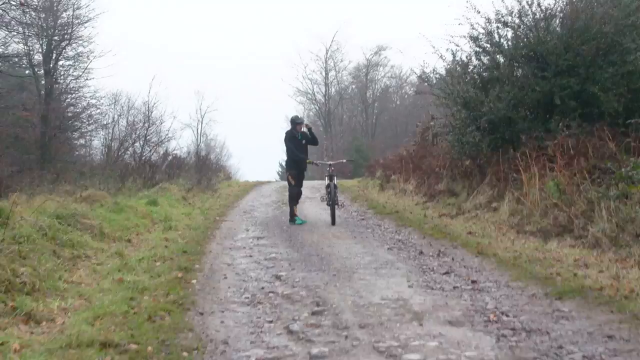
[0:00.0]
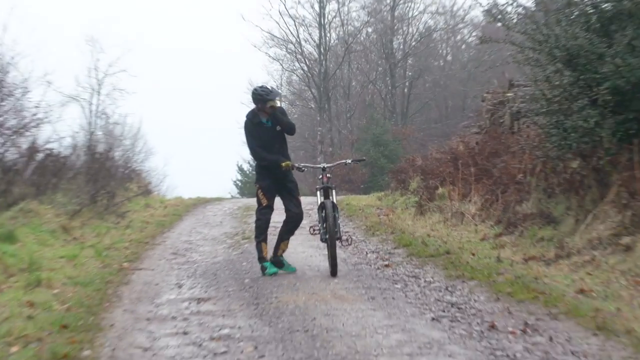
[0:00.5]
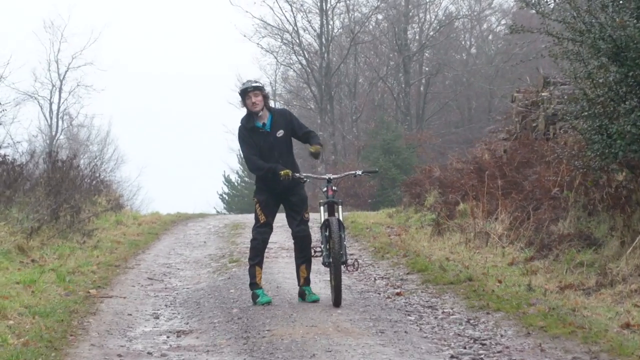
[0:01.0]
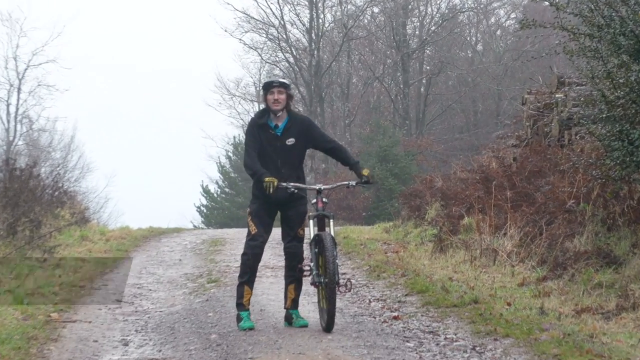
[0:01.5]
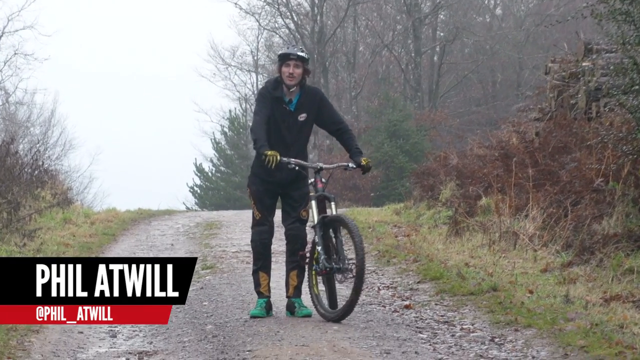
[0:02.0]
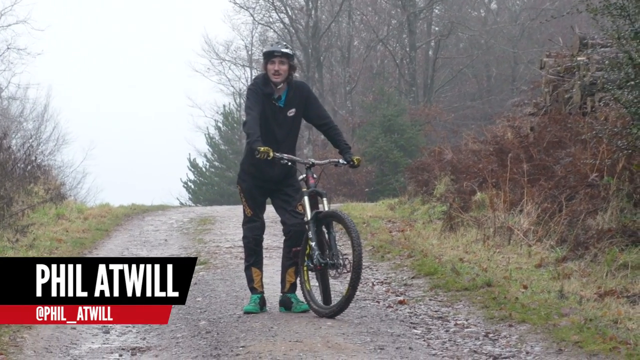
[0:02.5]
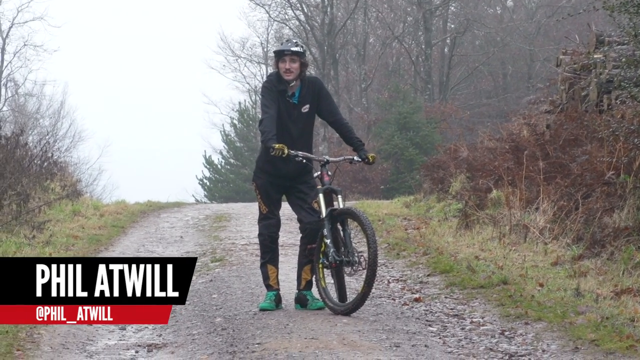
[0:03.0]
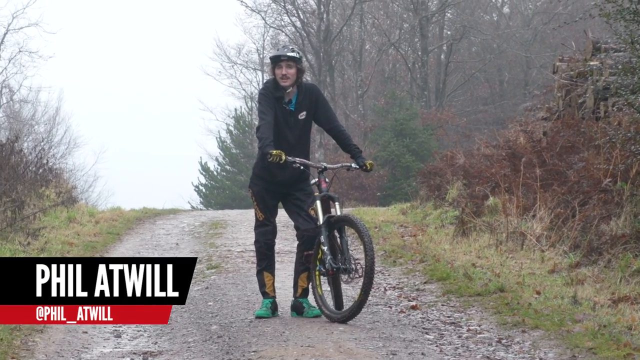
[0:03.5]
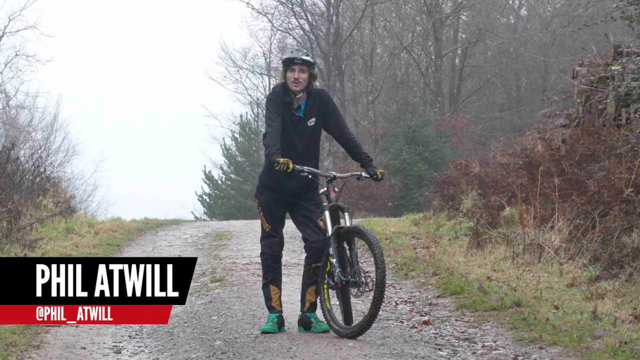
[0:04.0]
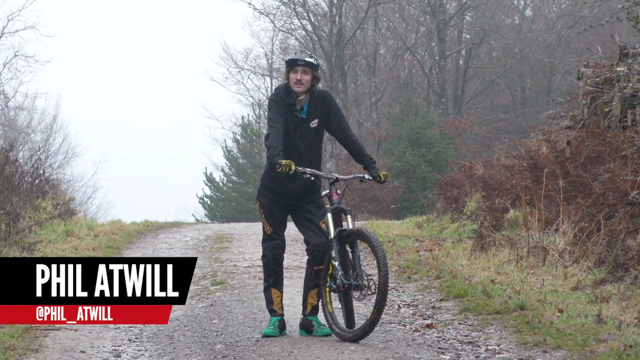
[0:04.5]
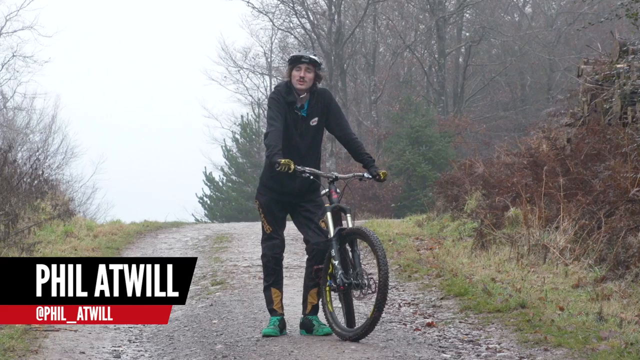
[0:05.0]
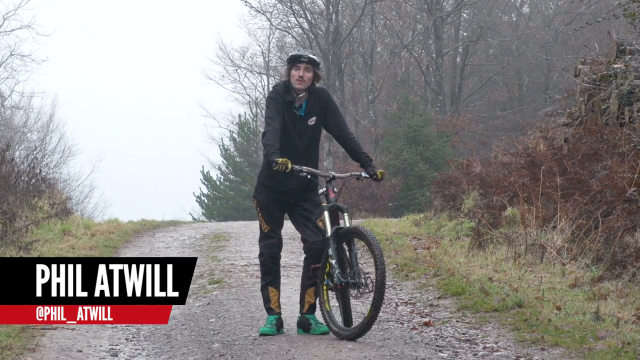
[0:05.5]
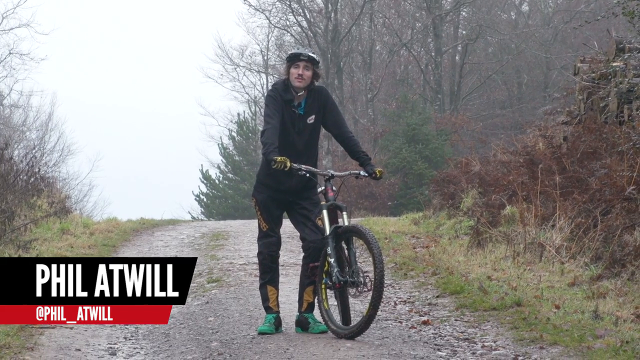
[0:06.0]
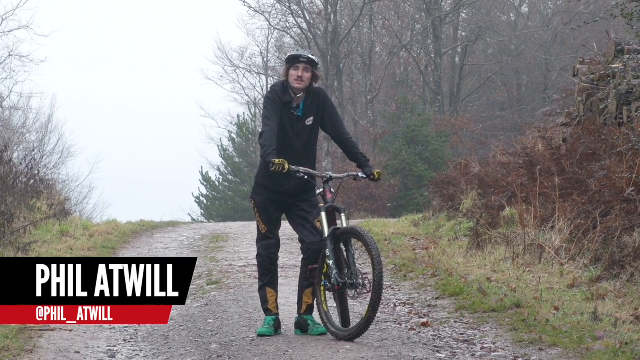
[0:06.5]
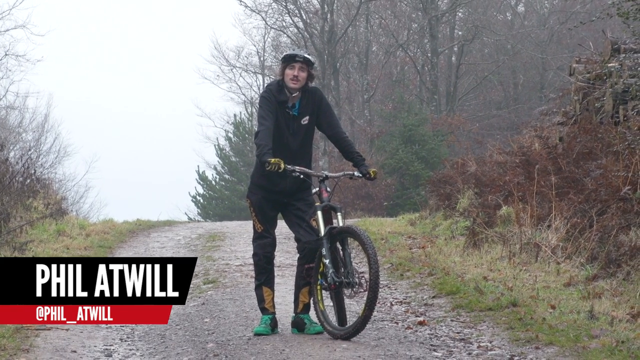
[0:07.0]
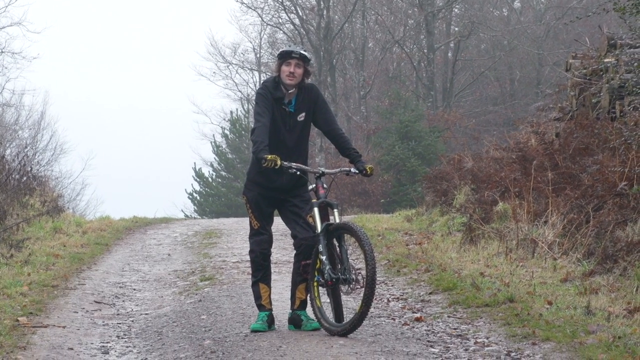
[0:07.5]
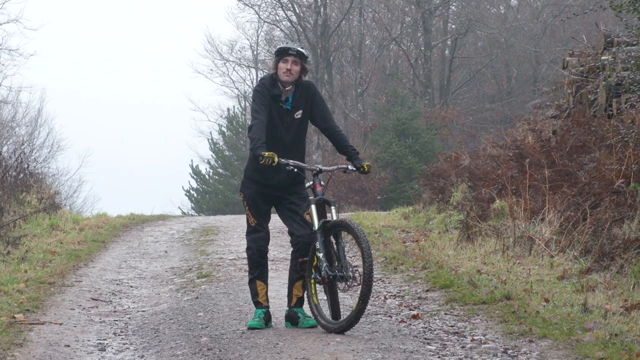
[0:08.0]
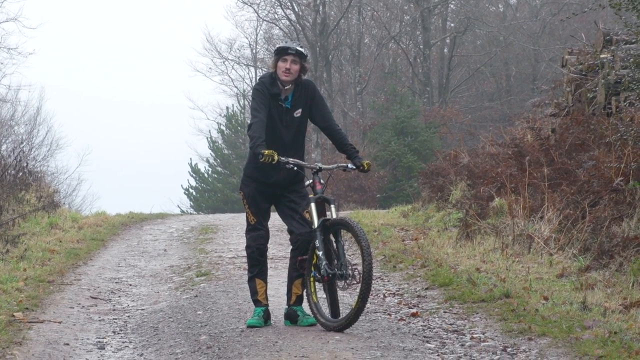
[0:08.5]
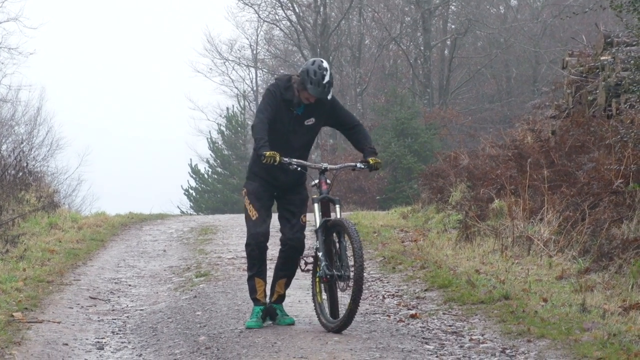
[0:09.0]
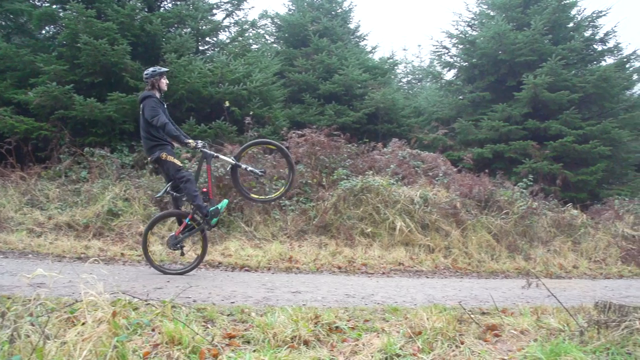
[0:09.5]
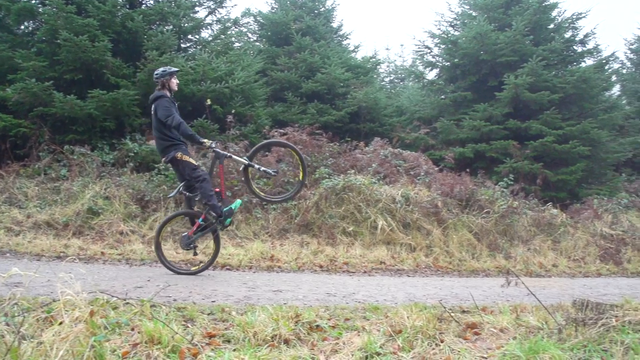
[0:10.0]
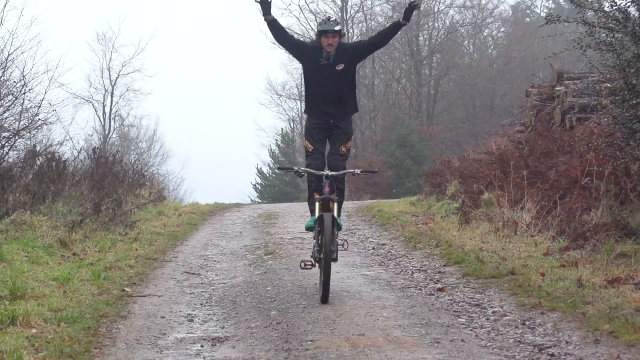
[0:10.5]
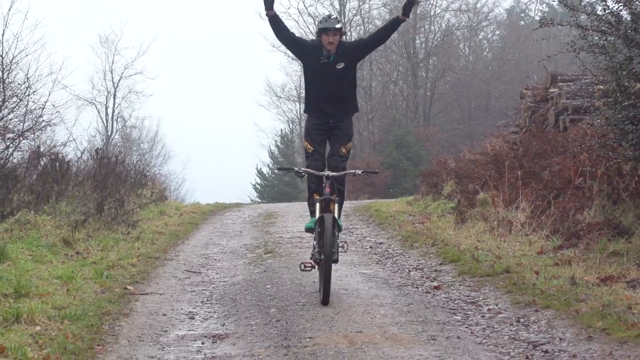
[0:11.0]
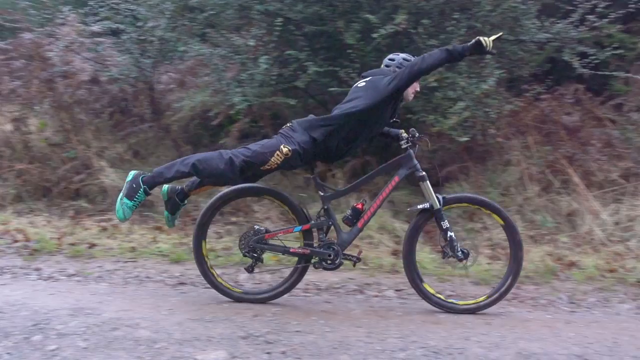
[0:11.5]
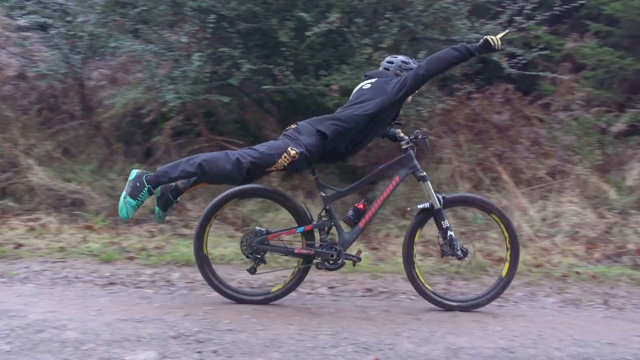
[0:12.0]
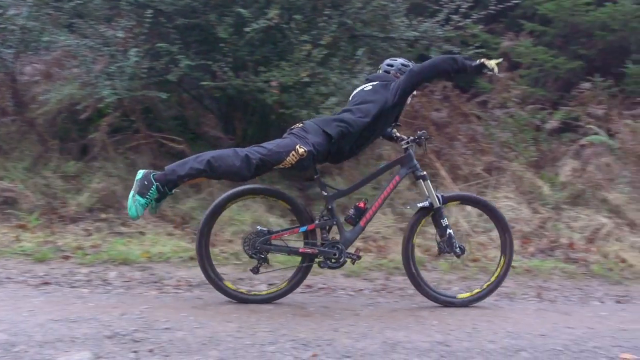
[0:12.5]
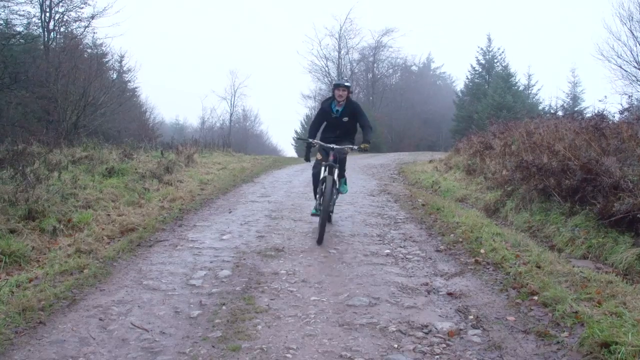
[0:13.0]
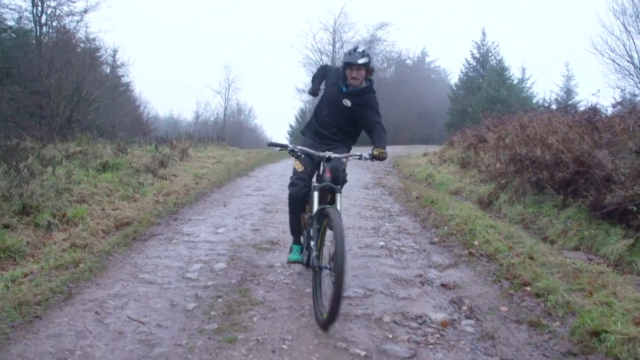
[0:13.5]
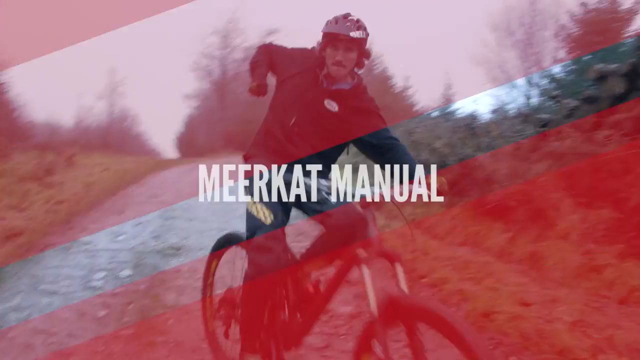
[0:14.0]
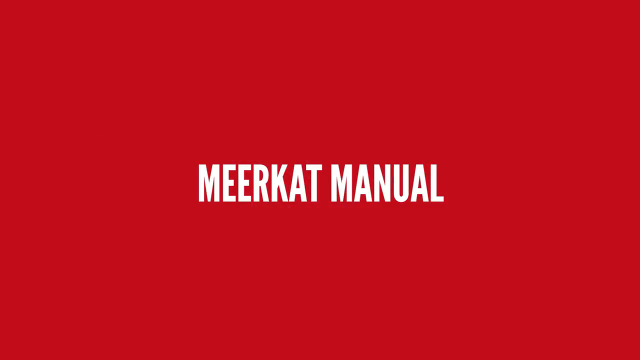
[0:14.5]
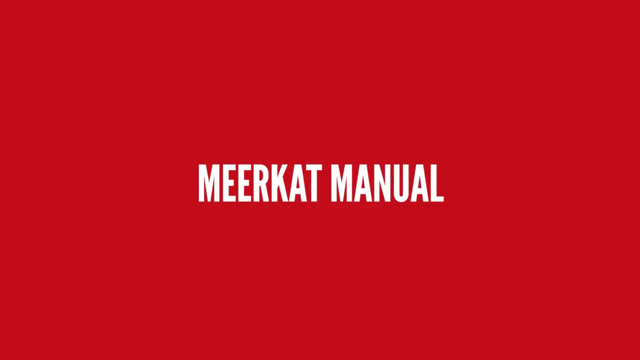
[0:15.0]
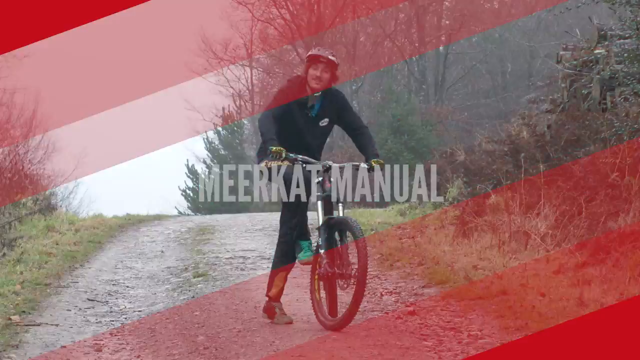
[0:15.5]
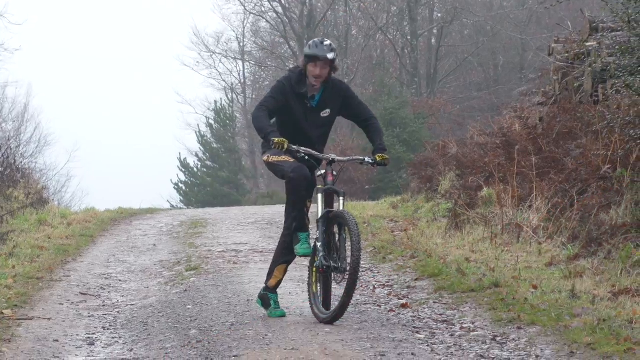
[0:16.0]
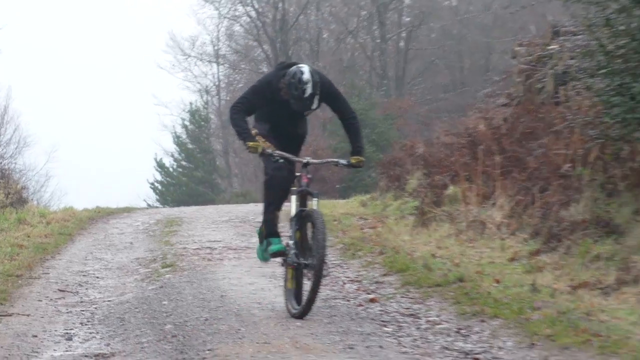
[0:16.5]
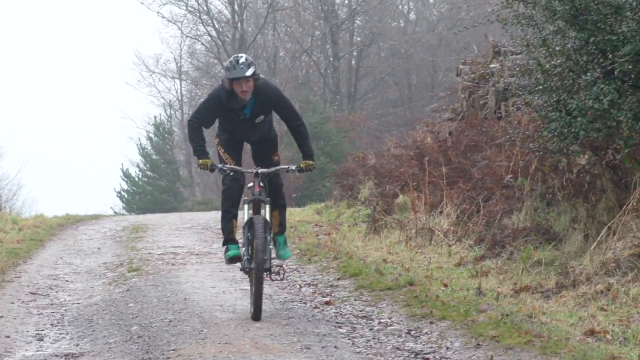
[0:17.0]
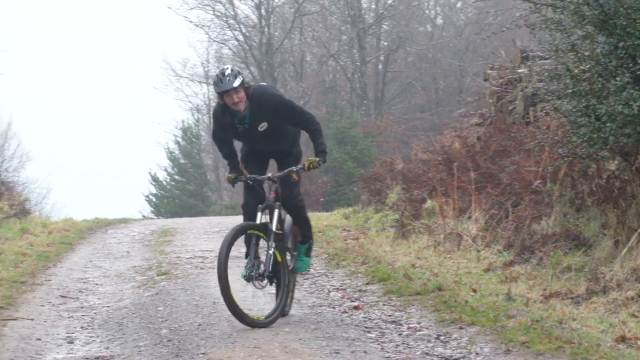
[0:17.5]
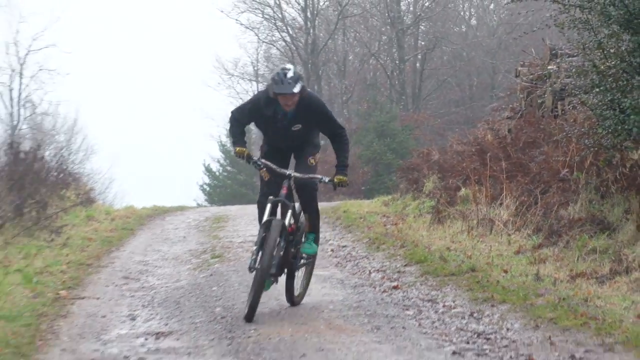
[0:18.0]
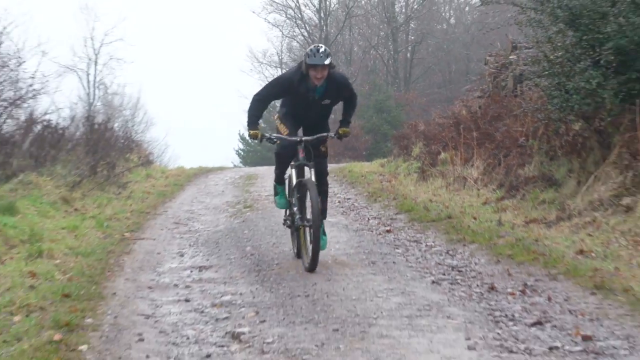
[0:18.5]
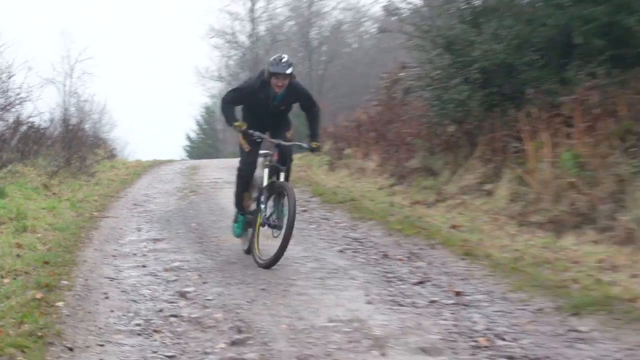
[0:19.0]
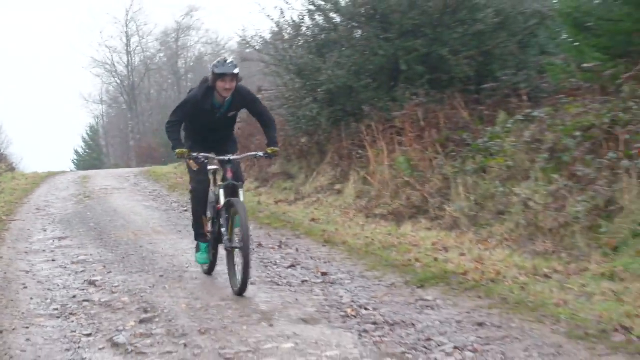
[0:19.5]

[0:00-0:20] Outdoors, under what looks like an overcast sky, a person is doing tricks on a bike. He rides on some type of trail in some type of park or forest. He appears to be a Caucasian male, possibly named Phil, and seems to have long hair. He wears a helmet, gloves, and green and black shoes. He performs multiple tricks and apparently shows how to do certain tricks, breaking them down step by step.